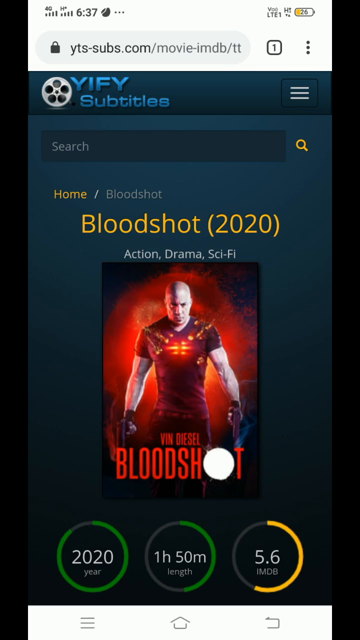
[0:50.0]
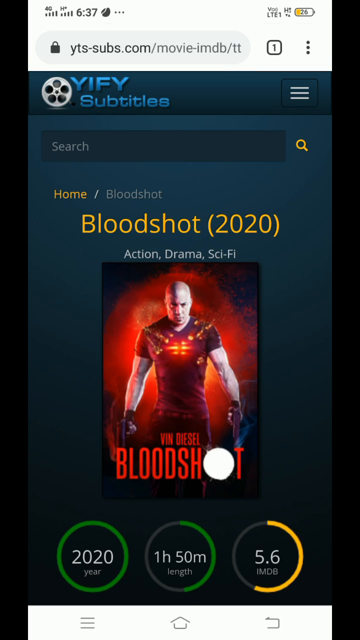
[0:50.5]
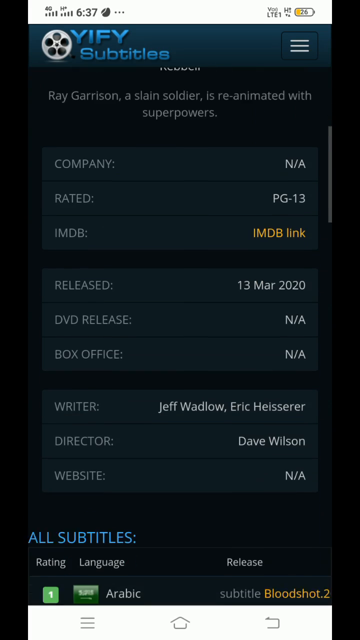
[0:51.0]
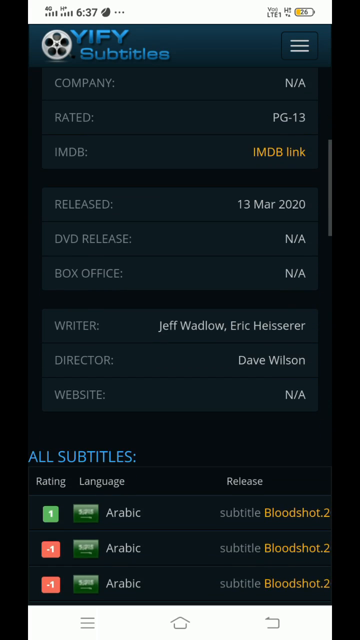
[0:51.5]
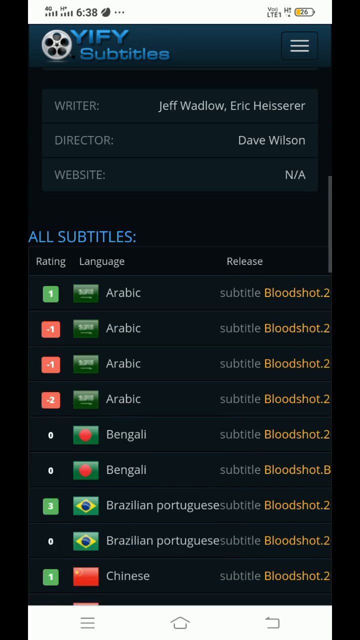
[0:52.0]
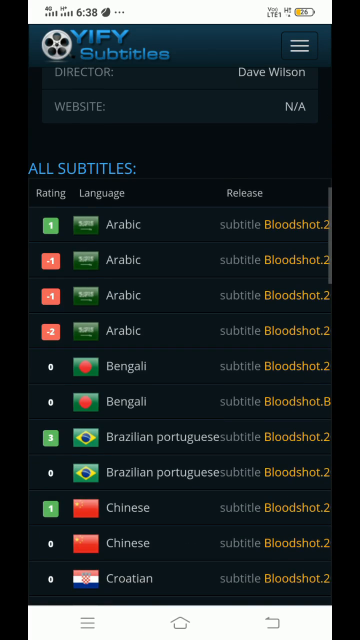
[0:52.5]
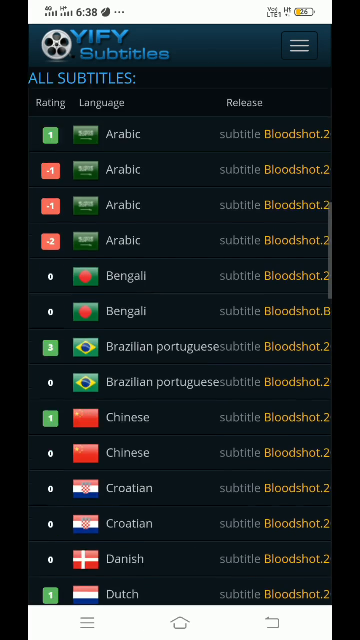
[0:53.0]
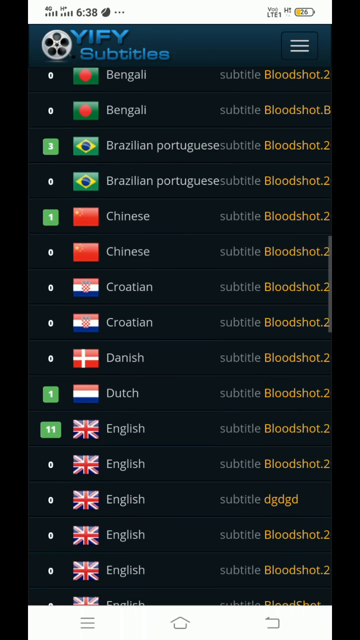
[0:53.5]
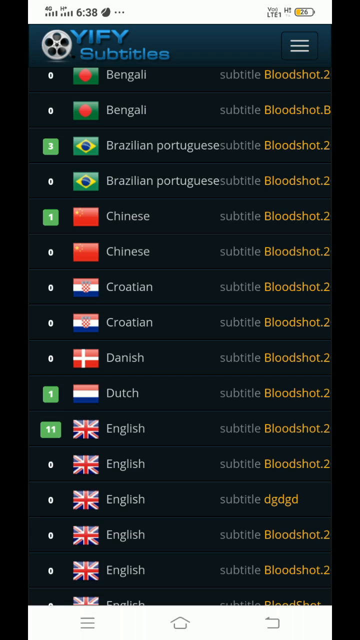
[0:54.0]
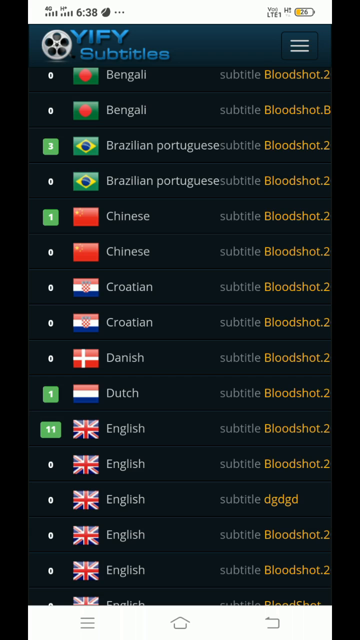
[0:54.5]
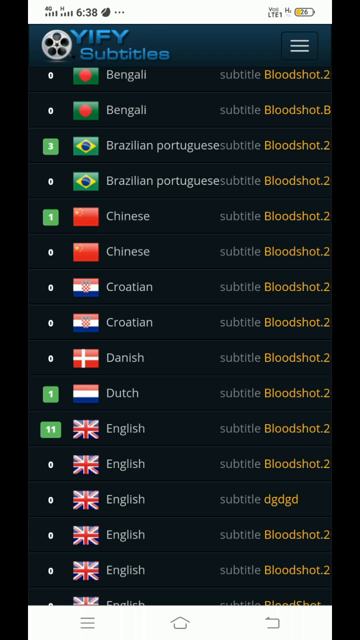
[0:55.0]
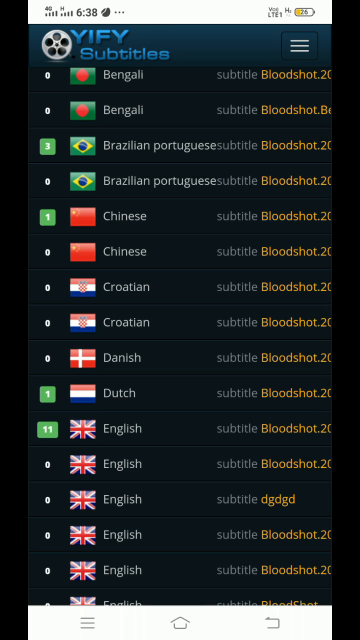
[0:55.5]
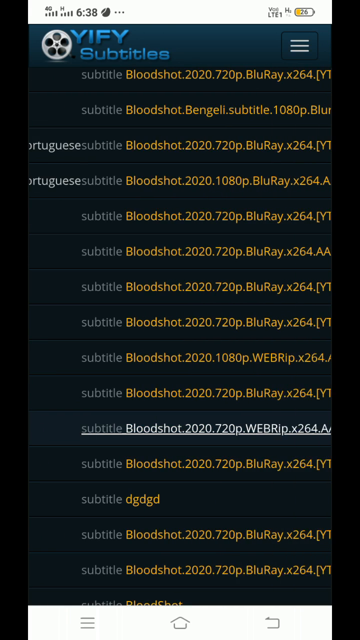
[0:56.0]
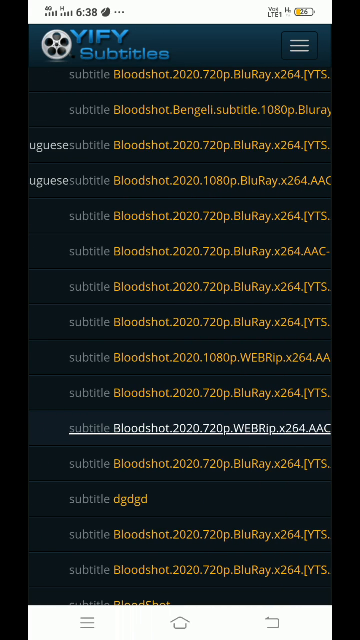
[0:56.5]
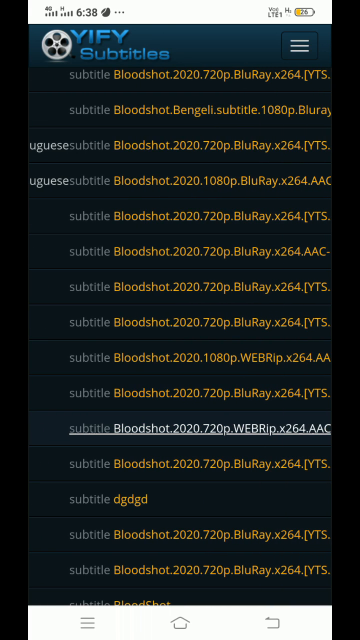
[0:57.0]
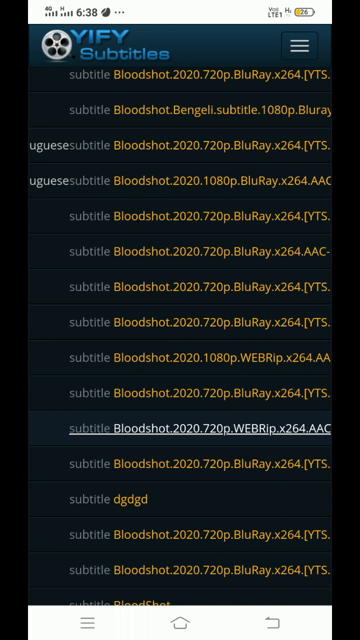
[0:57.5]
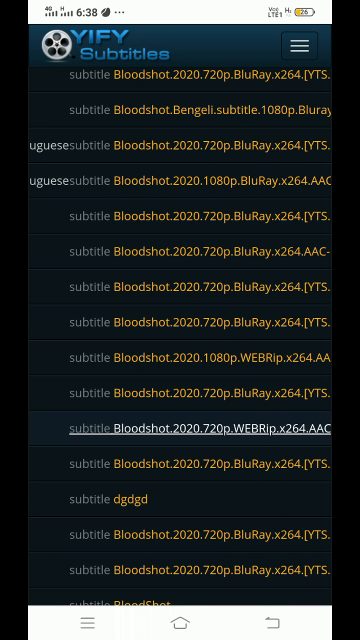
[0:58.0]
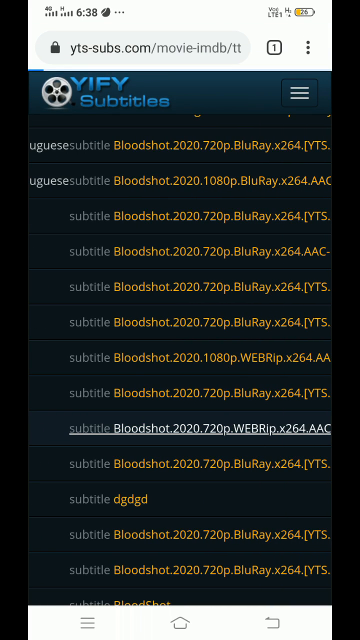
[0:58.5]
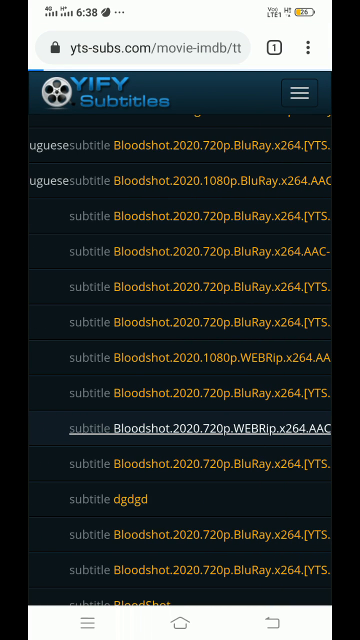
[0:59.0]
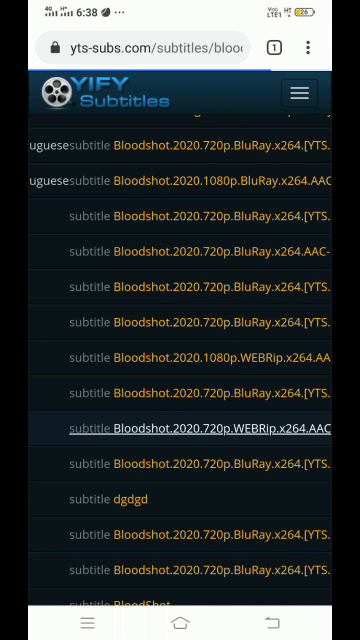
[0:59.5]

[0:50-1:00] The colours complete their move around the circles. The 2020 year circle fills completely green. The 1 hour 50 minute length circle fills halfway green, perhaps suggesting an average length for a movie. The right-hand circle, which says 5.6 IMDB, fills just over halfway yellow, perhaps showing how much out of 10 the film scores. A grey vertical scroll bar appears at the top right of the screen and seems to be pulled down as the page scrolls. More information about the film is displayed, including a fourth circle immediately under the other circles, though the writing underneath it is indistinct. Some of the key cast members' names are listed, and under this a single-line description of the film reads 'Ray Garriso,n a slain soldier, is re-animated with superpowers'. Then come details on company, rated, IMDB, released date, DVD released, box office, writer, director and website, all laid out in horizontal dark blue bars with white text. Underneath is a section titled all subtitles, presented in four vertical columns: a rating illustrated by green or red blocks, a language with a flag and the language name next to it, such as Arabic or Bengali, and under release subtitle a file name in yellow. The scrolling continues downward in a more halting fashion, as if looking for something. The screen then scrolls right, and the English subtitle, which has been yellow, is highlighted in white as if selected. The phone's search bar appears down from the top of the screen and fills in with the address from the highlighted subtitles link that was clicked.